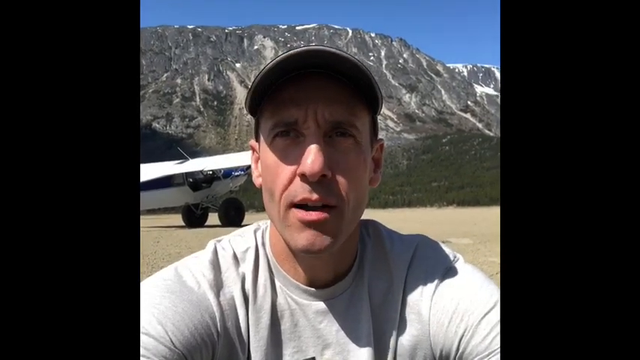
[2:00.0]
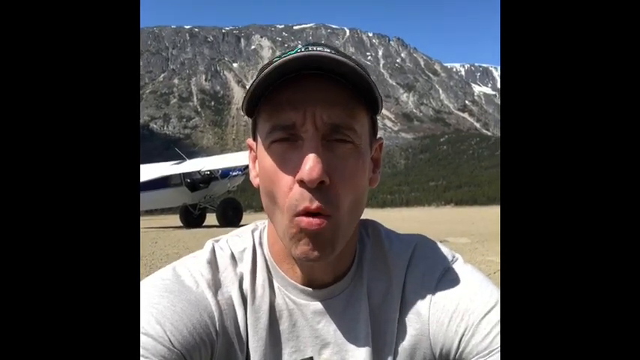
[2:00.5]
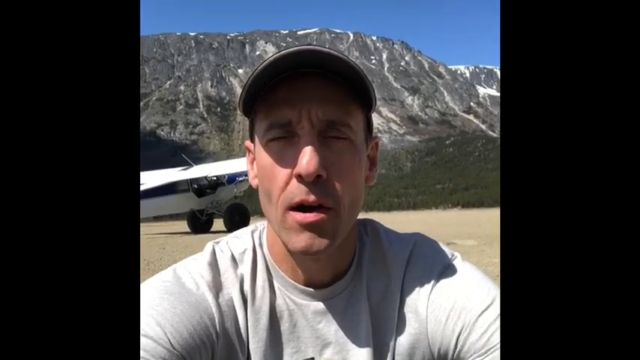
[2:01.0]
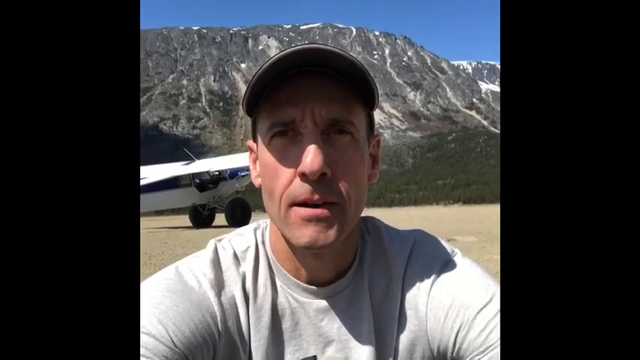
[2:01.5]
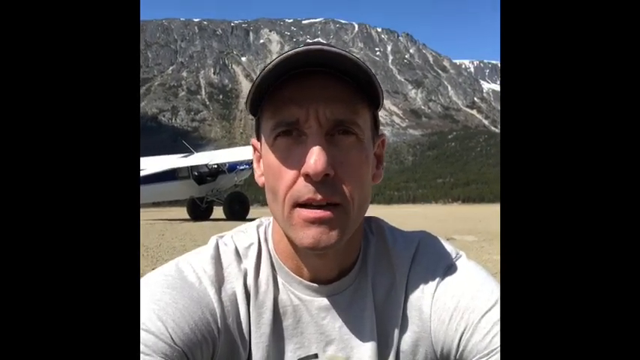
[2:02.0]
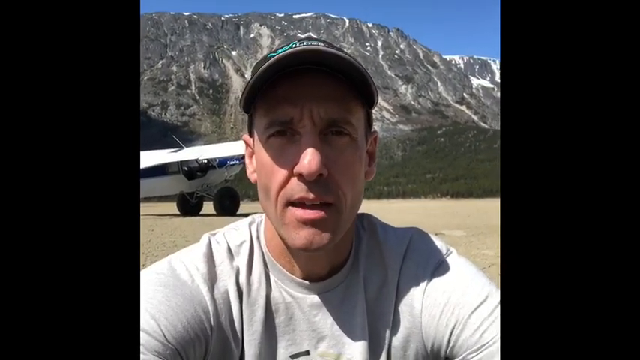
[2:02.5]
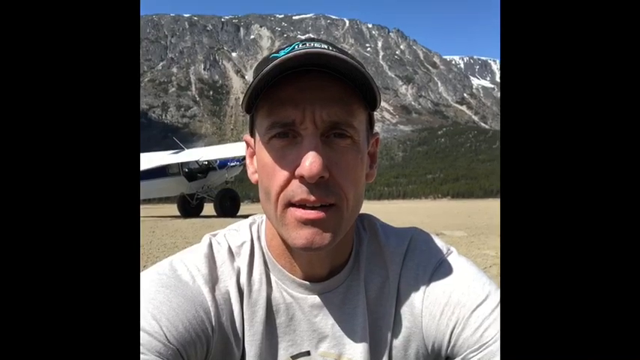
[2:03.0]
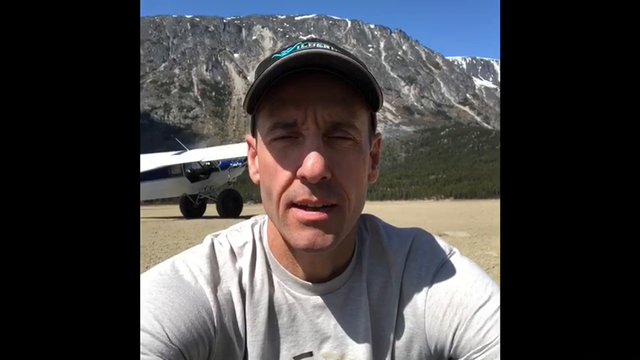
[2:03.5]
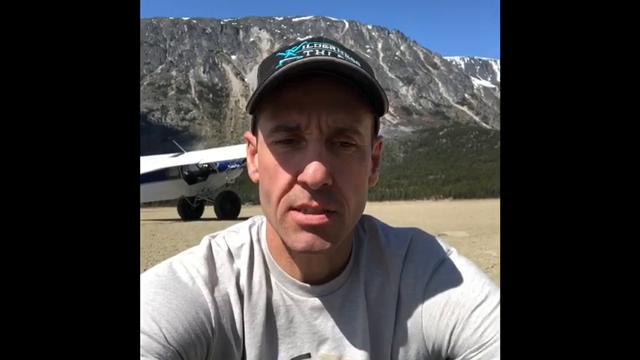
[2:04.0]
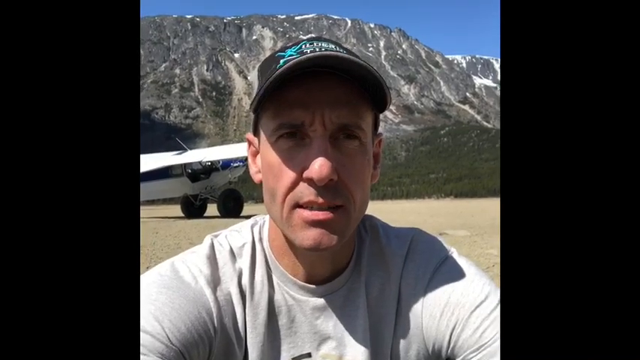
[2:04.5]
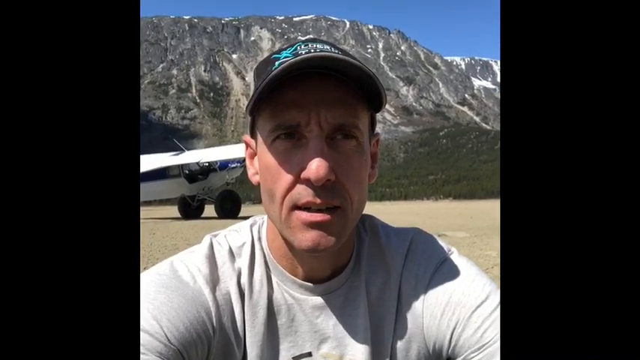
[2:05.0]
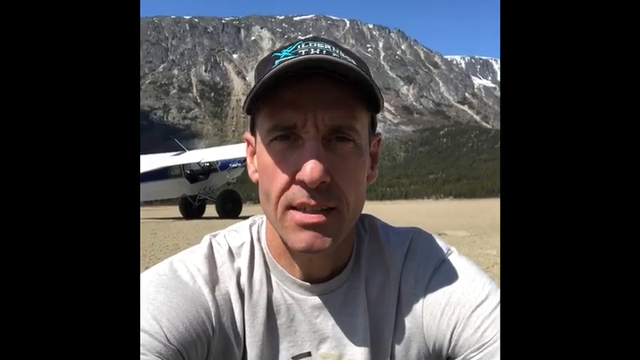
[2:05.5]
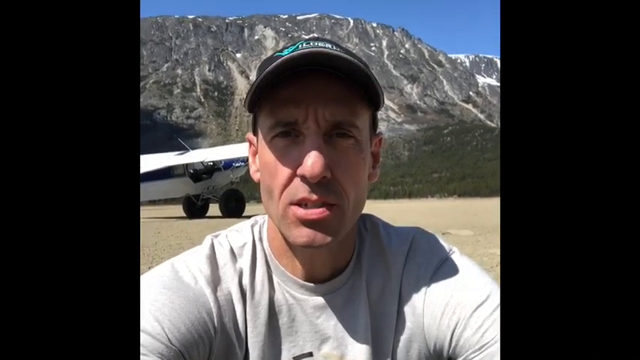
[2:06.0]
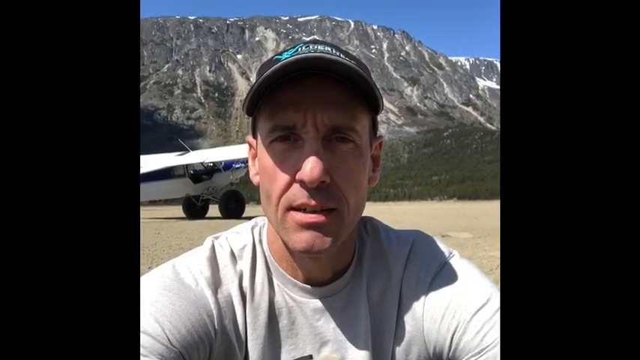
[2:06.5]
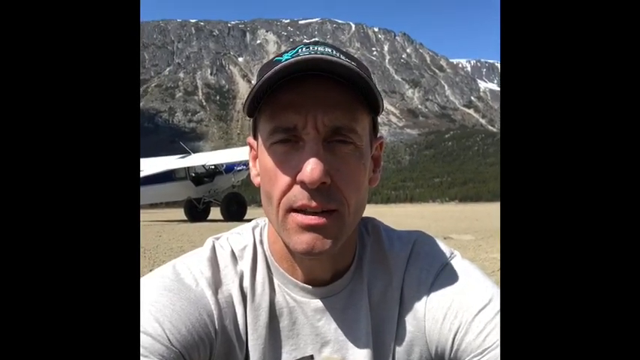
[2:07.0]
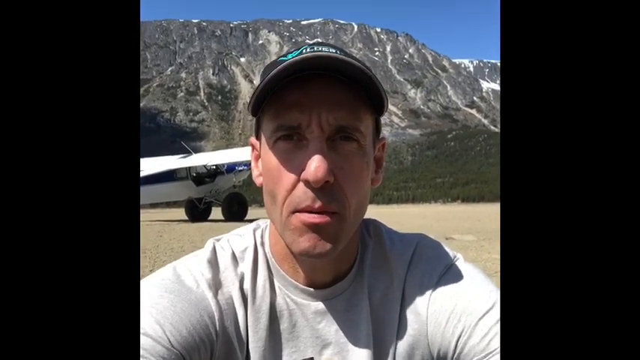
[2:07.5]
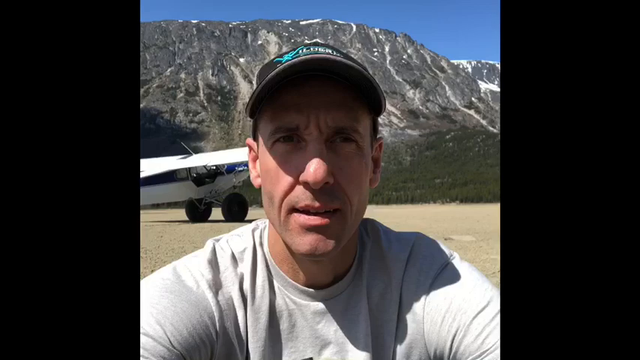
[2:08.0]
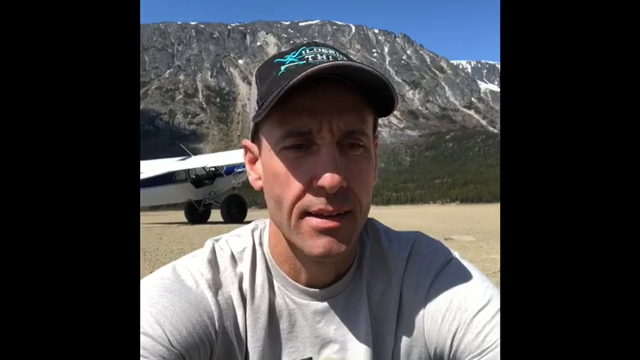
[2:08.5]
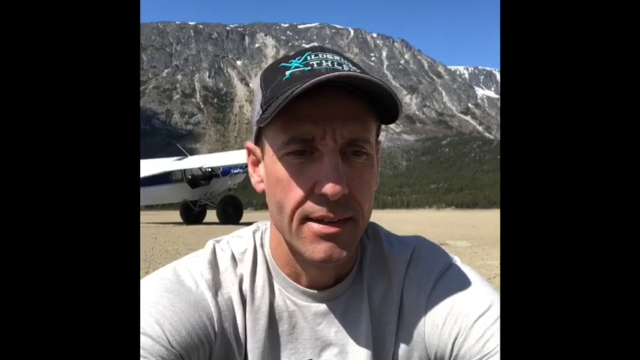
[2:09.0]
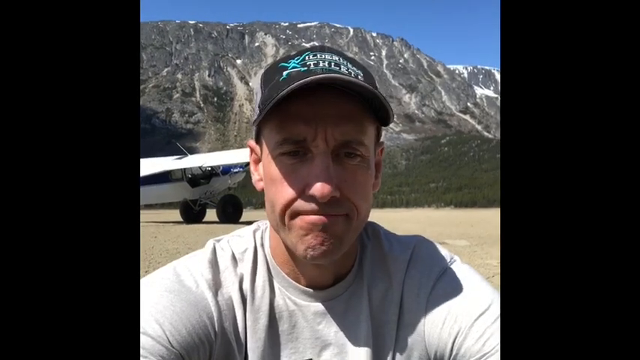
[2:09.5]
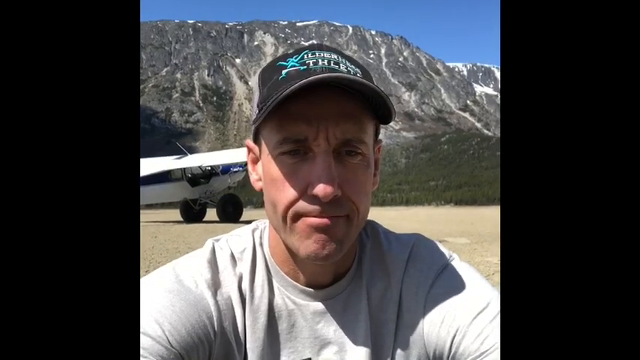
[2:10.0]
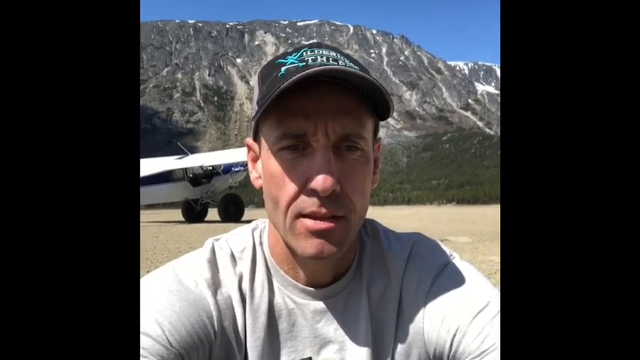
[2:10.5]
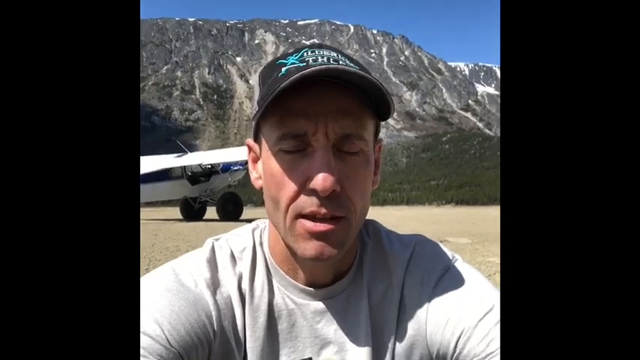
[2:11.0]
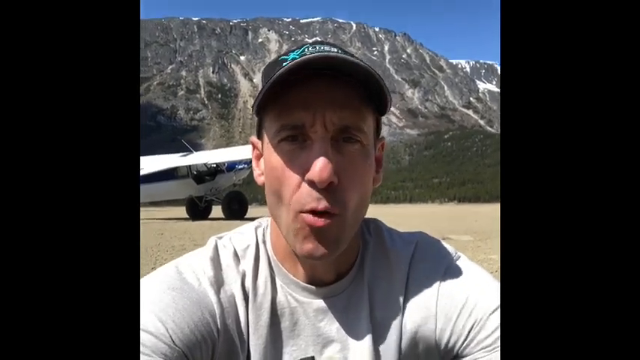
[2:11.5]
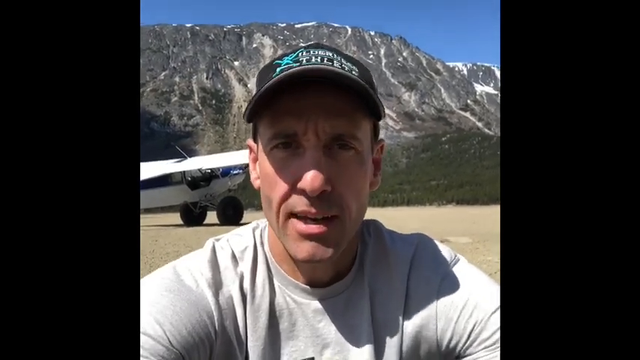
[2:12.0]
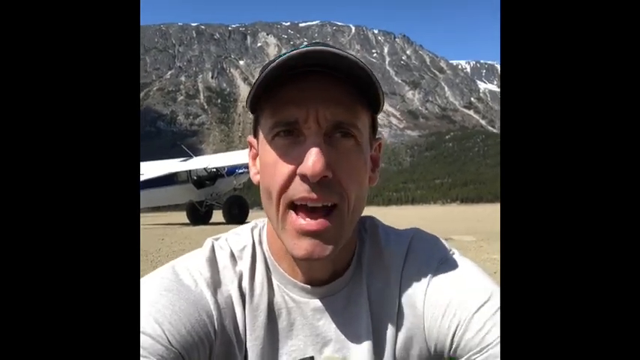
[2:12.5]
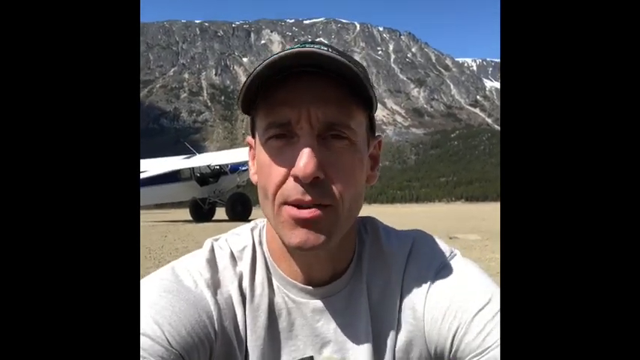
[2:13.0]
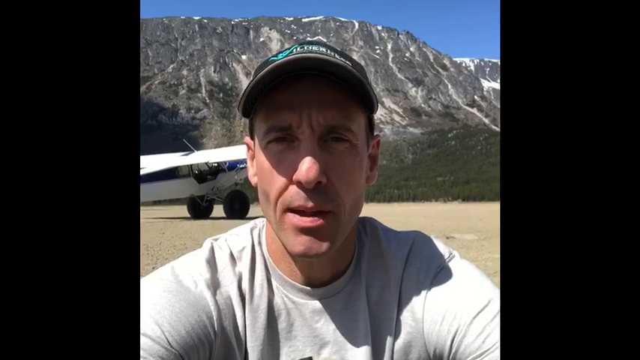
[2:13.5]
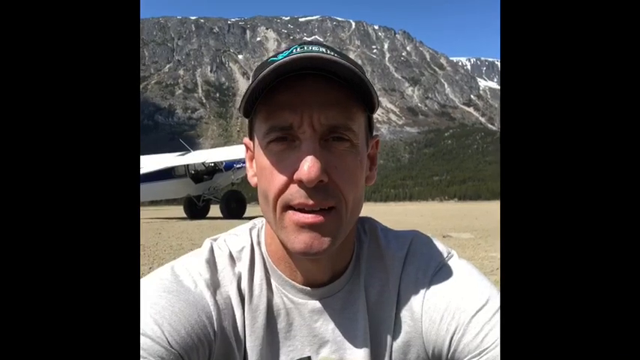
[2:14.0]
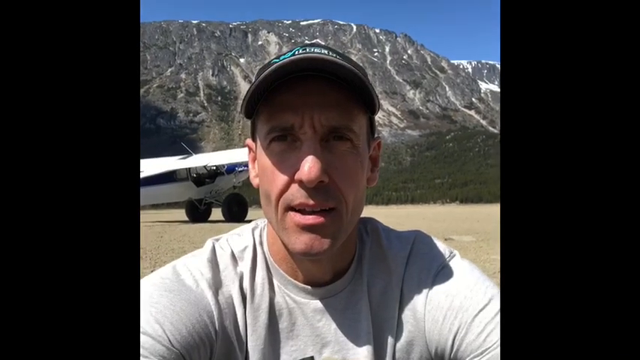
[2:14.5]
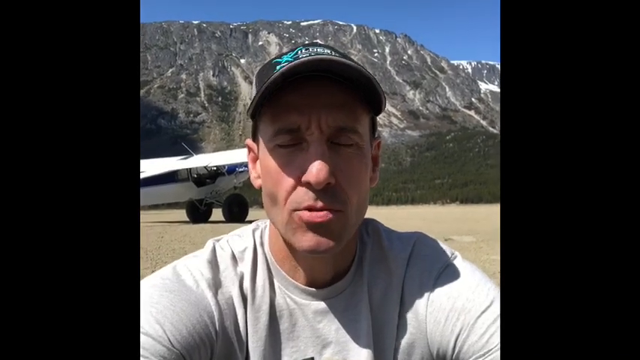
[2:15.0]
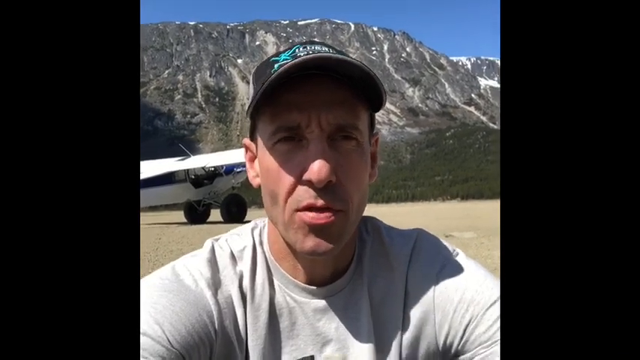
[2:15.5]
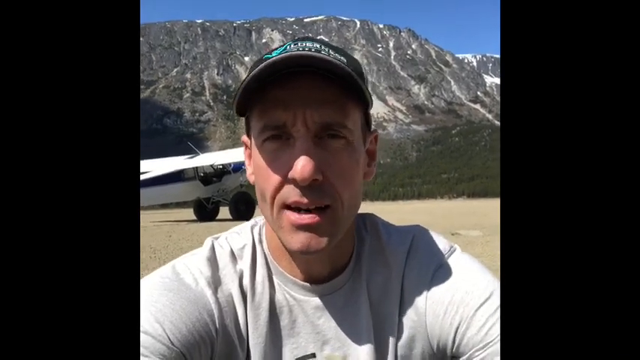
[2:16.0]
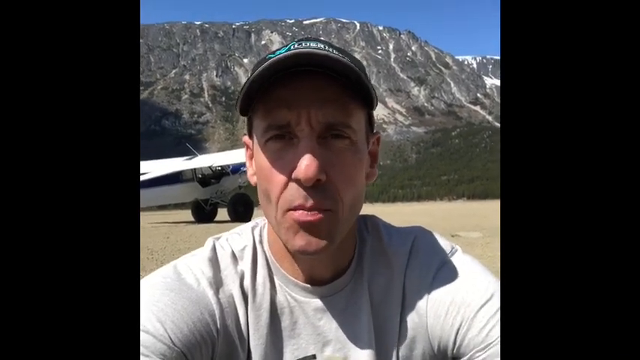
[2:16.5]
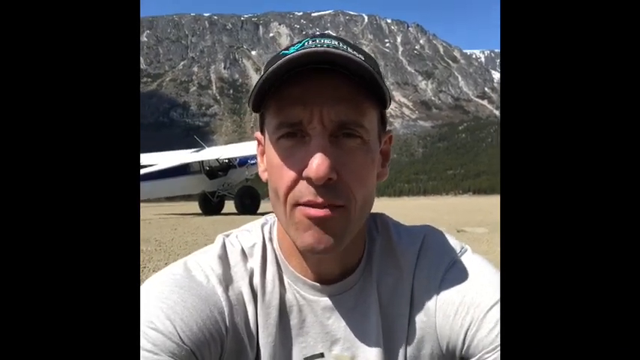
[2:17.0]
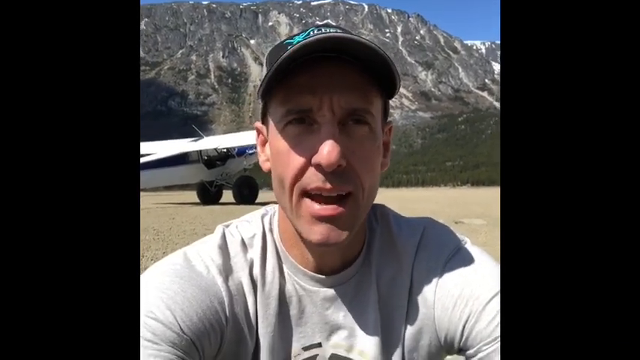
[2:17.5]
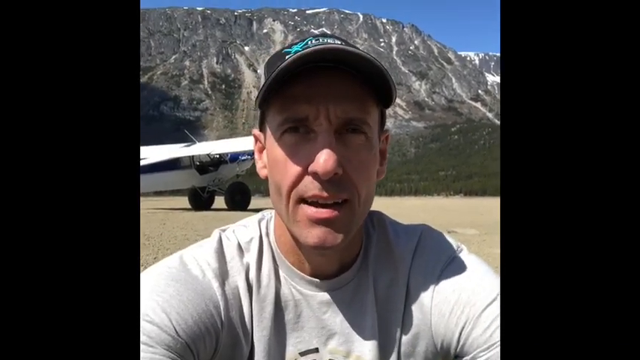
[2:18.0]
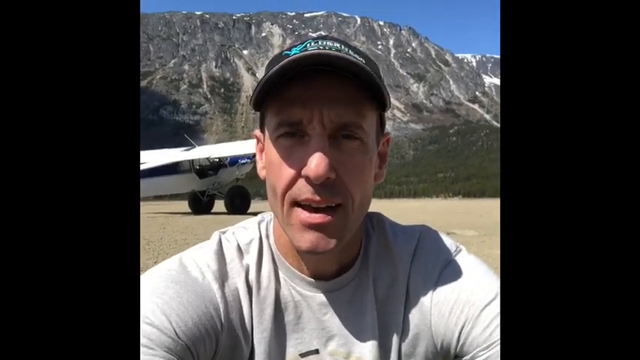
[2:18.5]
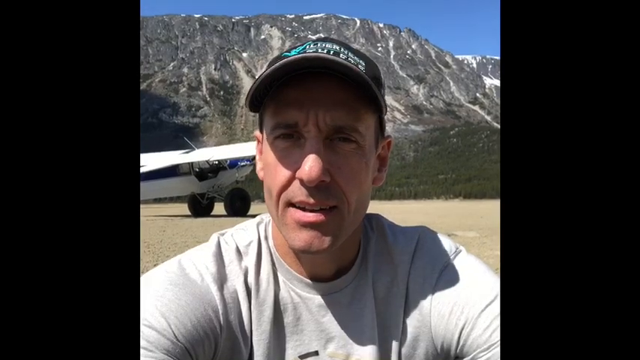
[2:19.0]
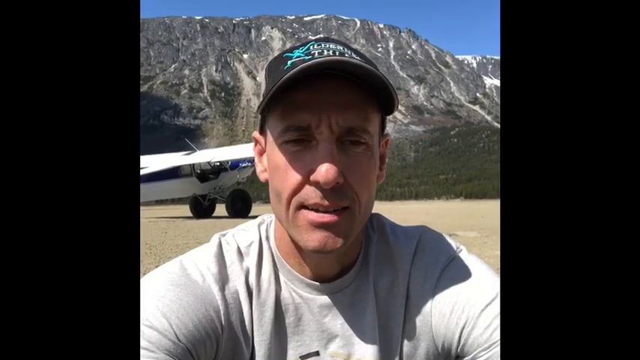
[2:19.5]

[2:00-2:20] A man speaks, seen from about the shoulders up, apparently holding the camera with both arms stretched out in front of him. He wears a black baseball cap whose shadow covers his eyes and nose, so his eyes are barely visible. Behind him is a flat brown area with a mountain in the background, and a white airplane is sitting on the flat area. He first looks straight at the camera, then tilts his head left and down as though having a sad thought. His mouth makes an expression of dismay and he shakes his head slightly as he speaks. The camera then jiggles as though he wants to make a gesture with his hands.